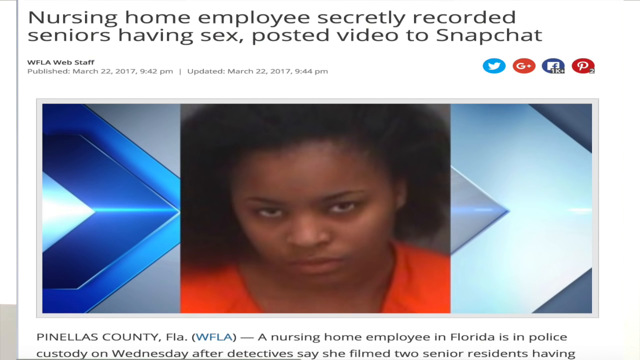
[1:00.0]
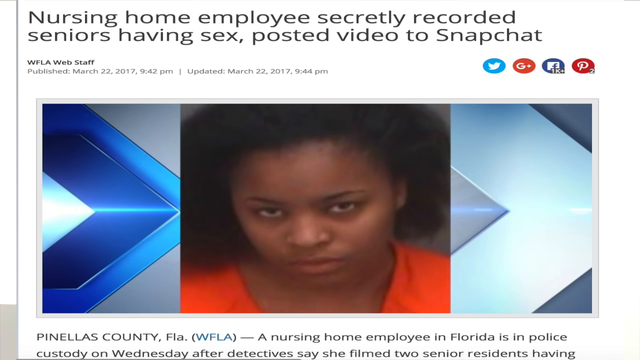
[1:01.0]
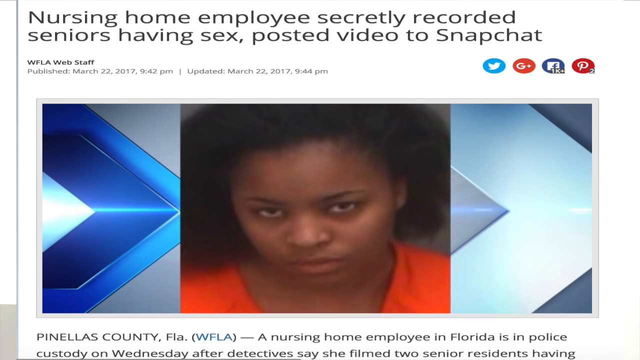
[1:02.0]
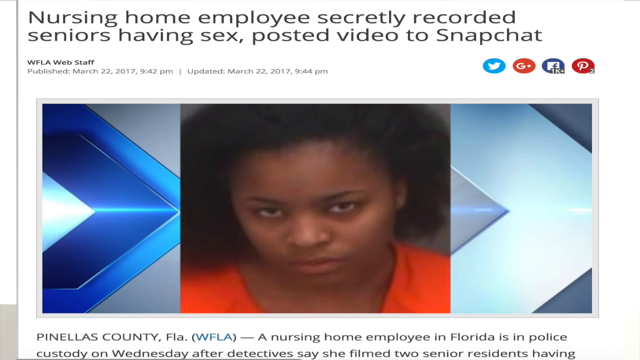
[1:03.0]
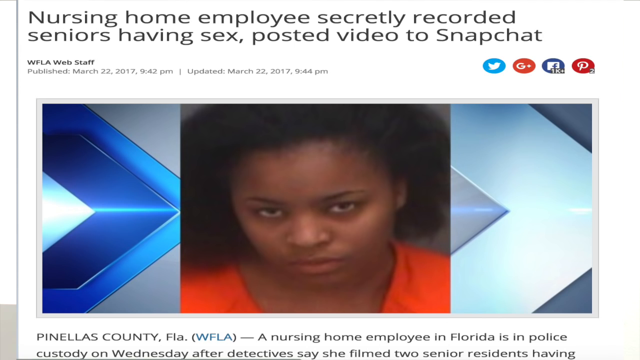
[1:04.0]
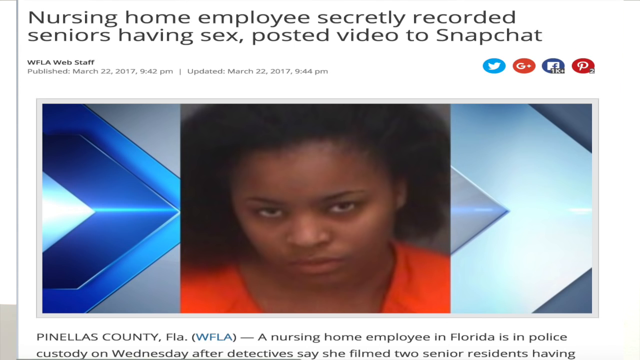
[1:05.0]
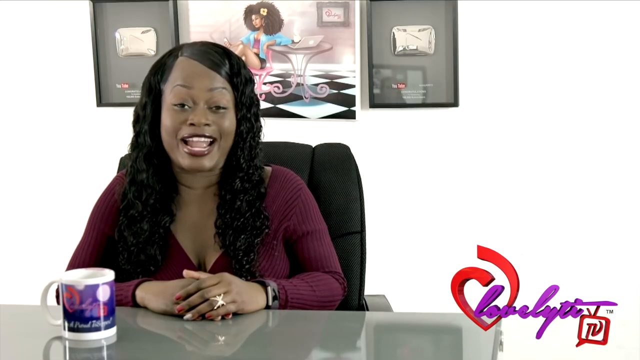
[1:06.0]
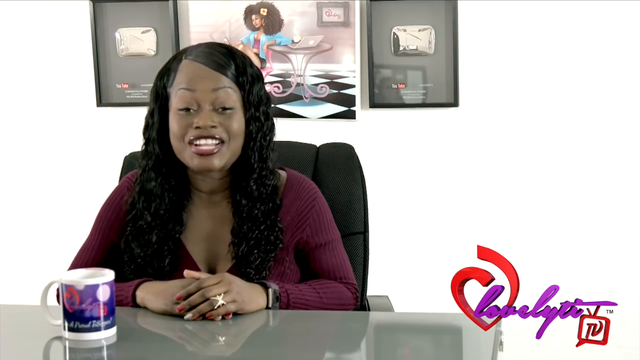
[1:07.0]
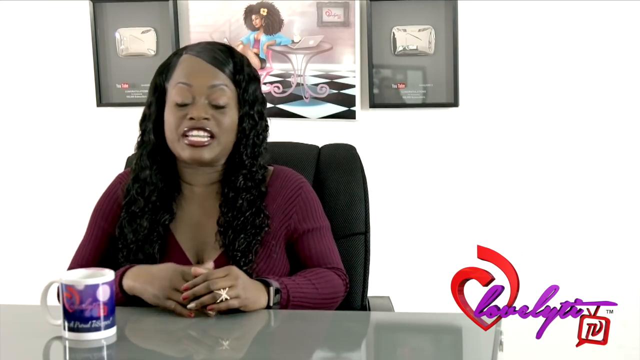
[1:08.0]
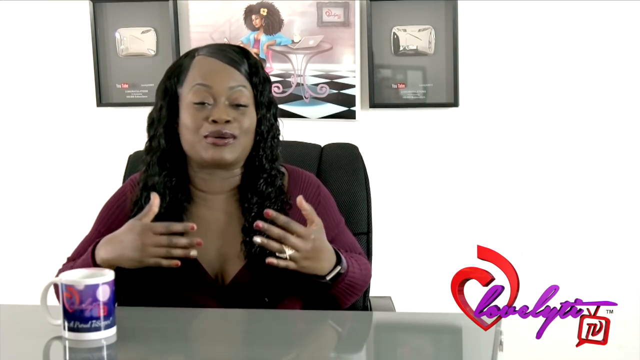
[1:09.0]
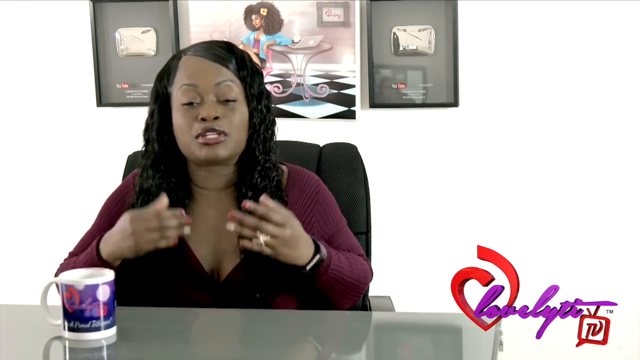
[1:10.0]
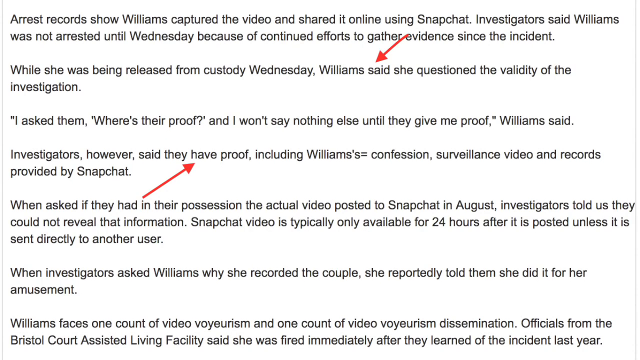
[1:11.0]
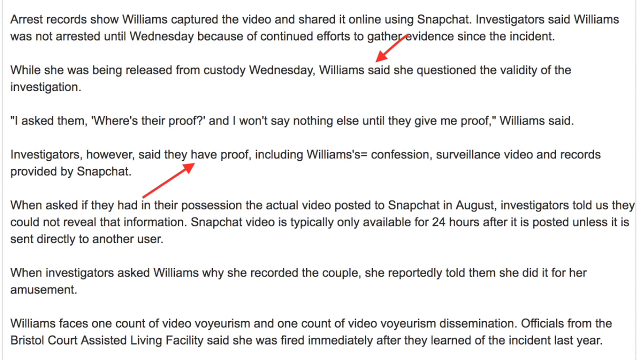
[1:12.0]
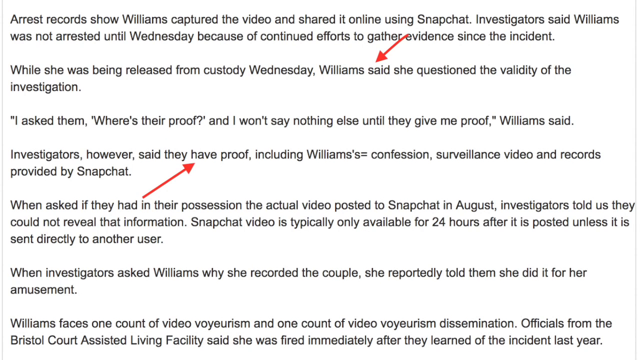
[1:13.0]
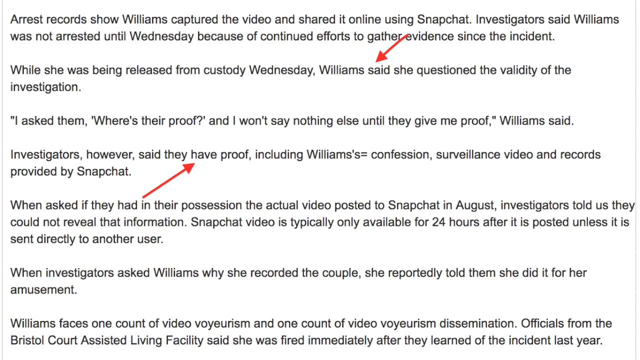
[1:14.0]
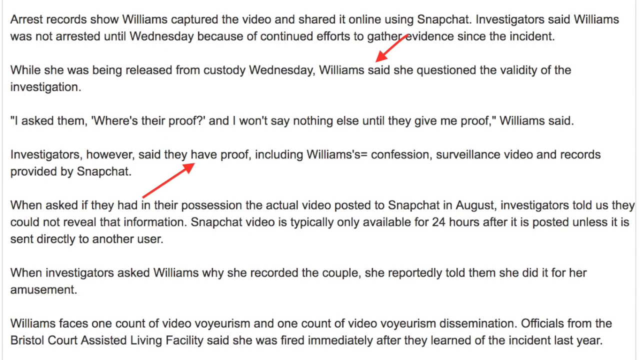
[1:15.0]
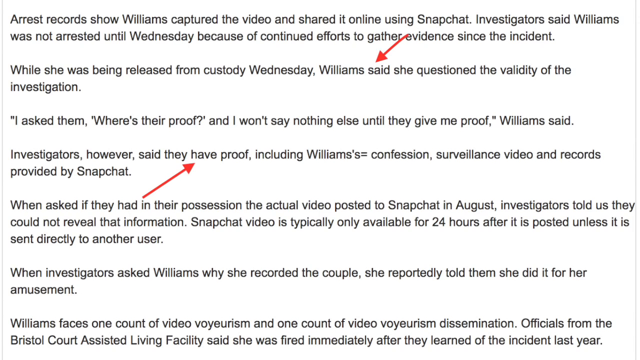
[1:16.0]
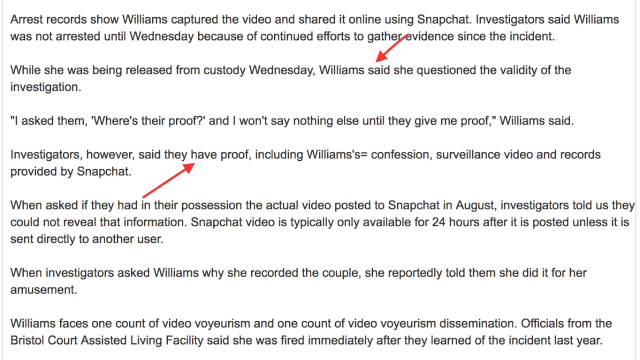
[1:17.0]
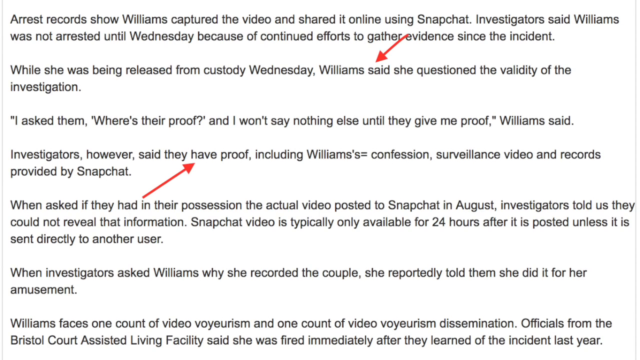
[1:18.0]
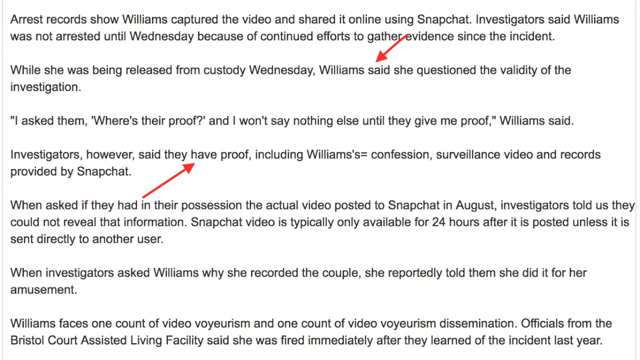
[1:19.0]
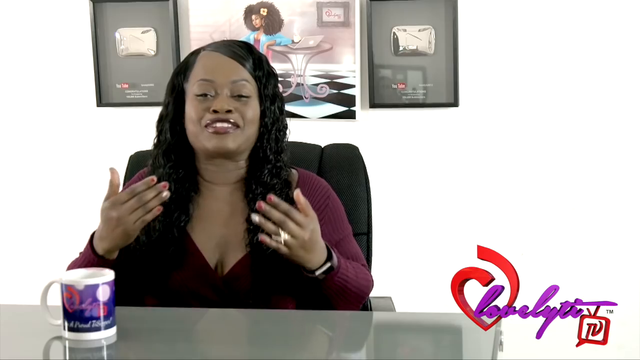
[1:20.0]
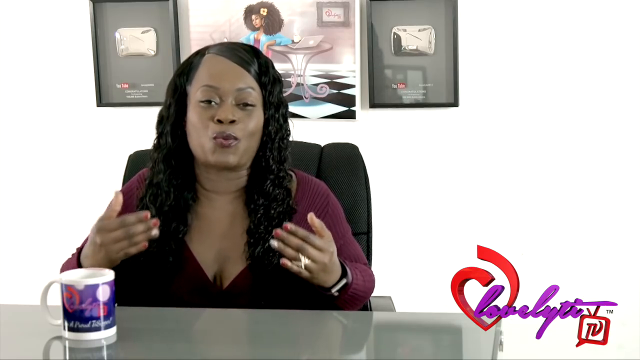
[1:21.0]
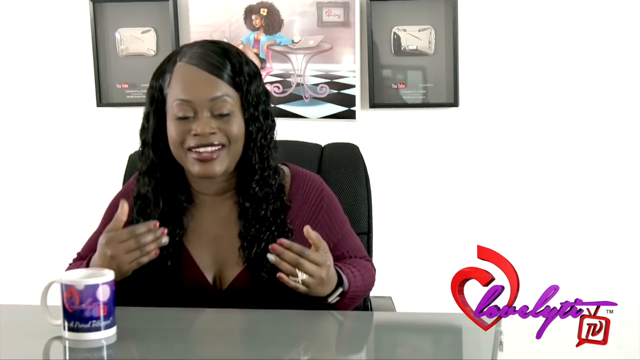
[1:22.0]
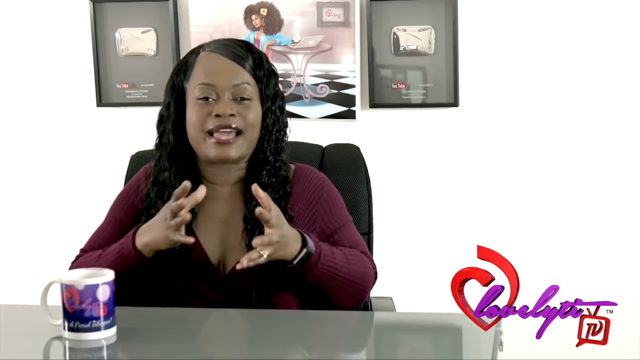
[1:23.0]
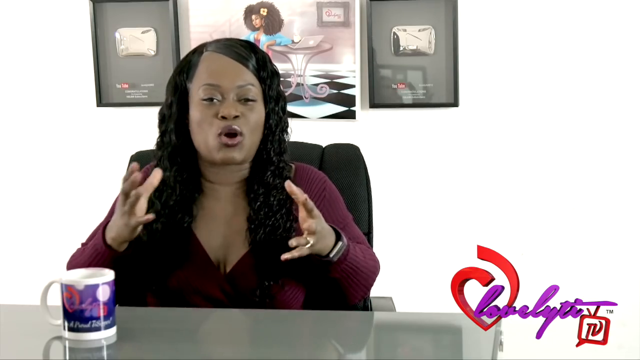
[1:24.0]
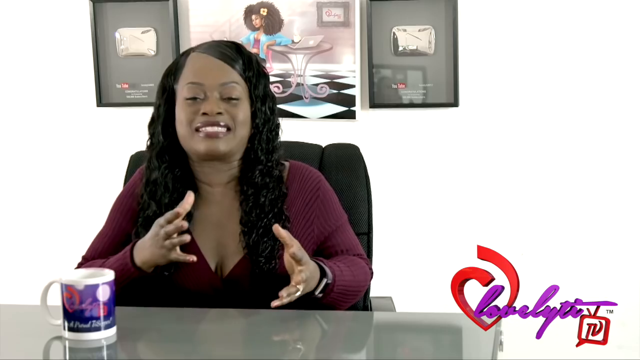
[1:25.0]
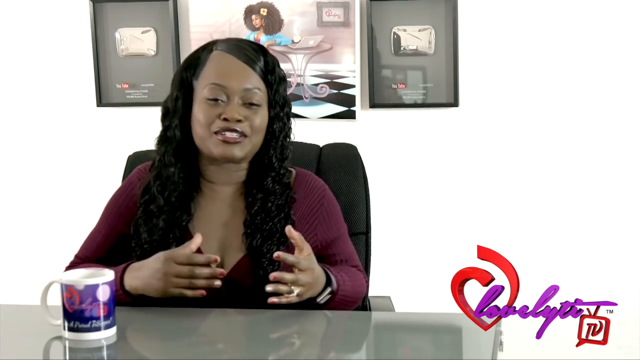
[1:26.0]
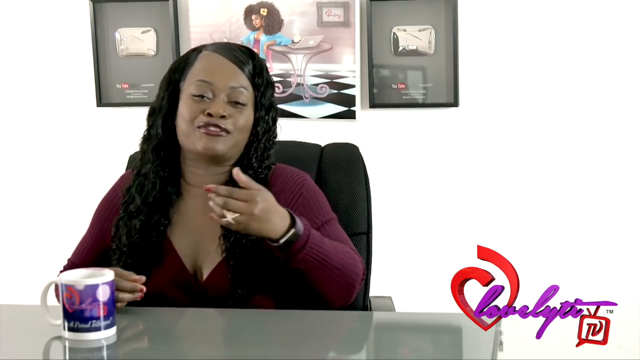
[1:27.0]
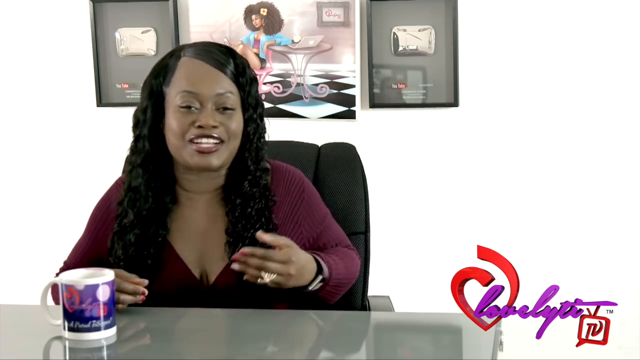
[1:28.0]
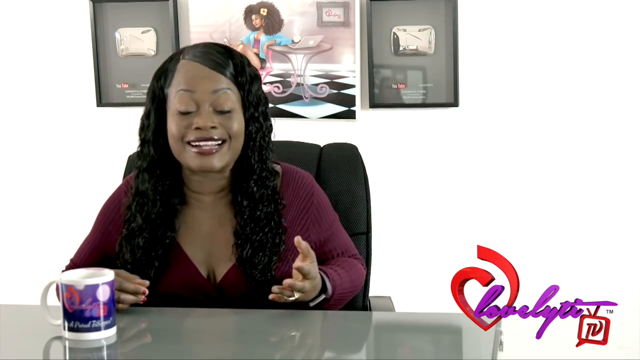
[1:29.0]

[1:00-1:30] A close-up, zoomed-in image shows the woman who appears to be under arrest, apparently in her mugshot. She has a very angry expression, is not smiling, and her medium-length hair is pulled straight back on her head. At the top of the screen, text credits the news update to WFLA web staff and shows that it was published March 22, 2017 at 9:42 p.m. and updated March 22, 2017 at 9:44 p.m. The scene changes back to the YouTube content creator, then quickly changes to arrest records reading "Williams who has captured the video and shared it online using Snapchat, investigators say Williams was not arrested until Wednesday because of continued efforts to gather evidence since the incident." Two red arrows are on this screen: one at the top right points down to the words "Williams said", and one in the lower, mid-to-left area points up to the words "have proof".